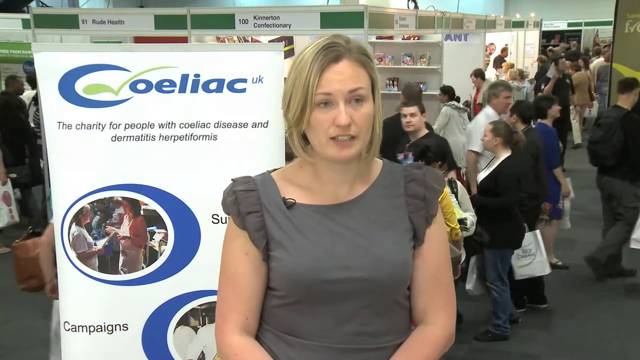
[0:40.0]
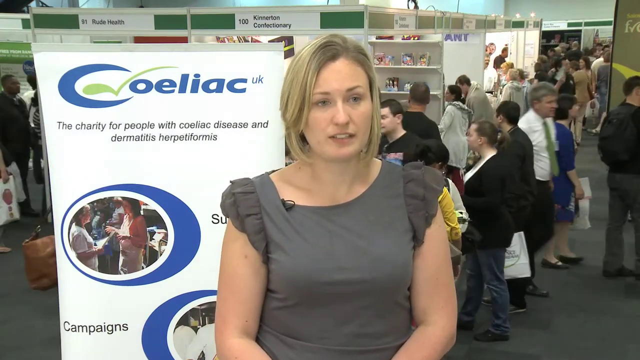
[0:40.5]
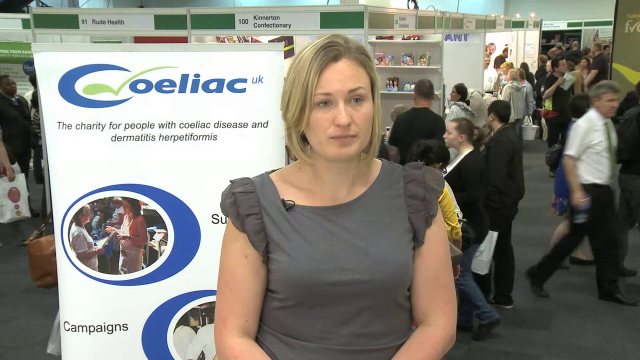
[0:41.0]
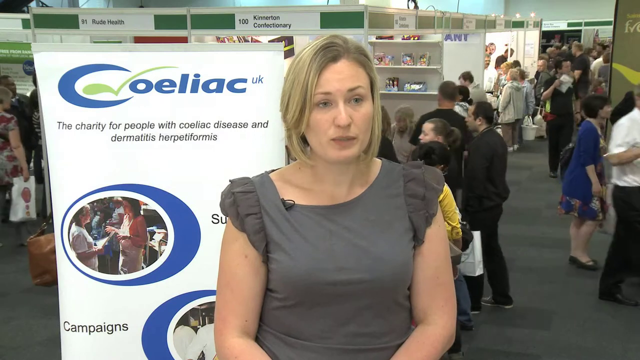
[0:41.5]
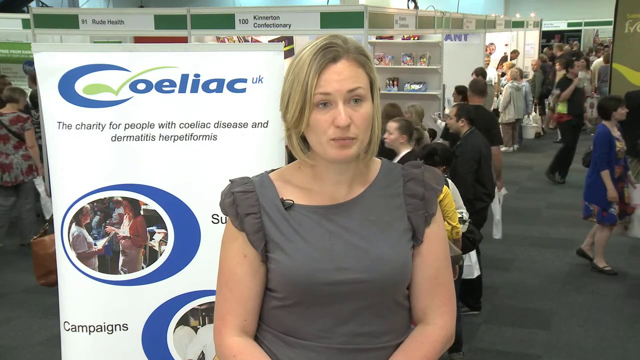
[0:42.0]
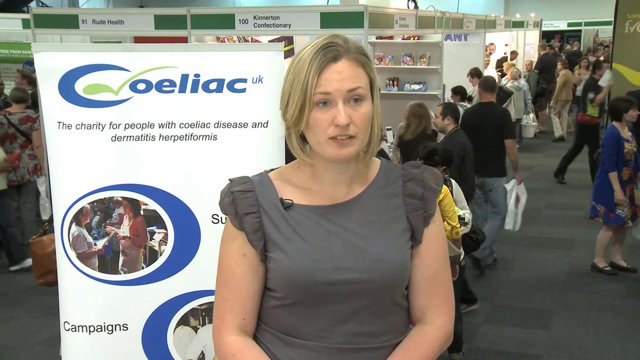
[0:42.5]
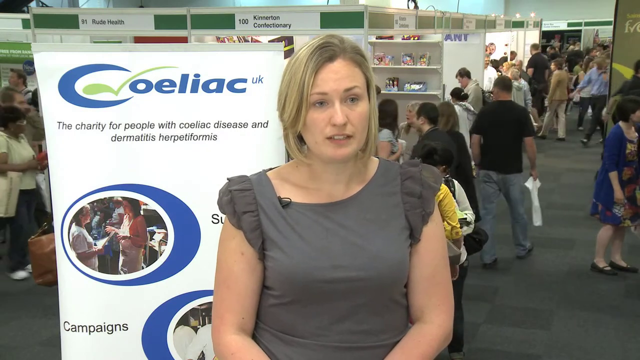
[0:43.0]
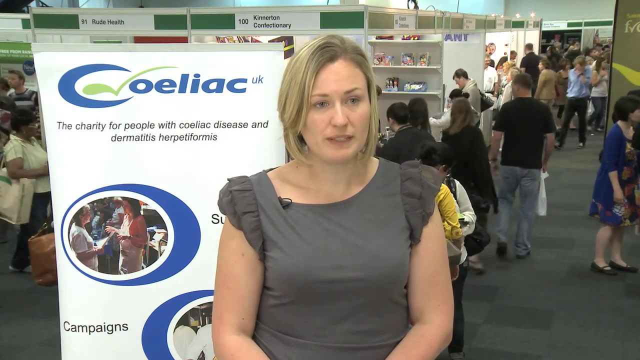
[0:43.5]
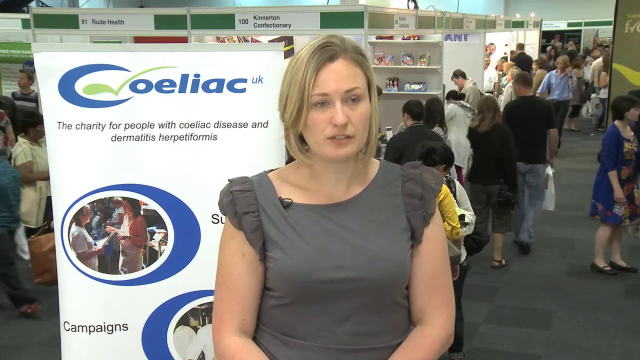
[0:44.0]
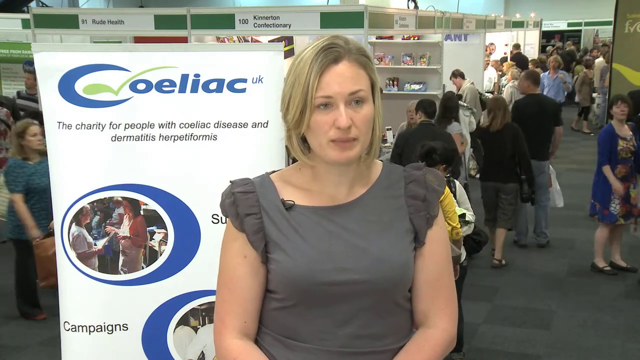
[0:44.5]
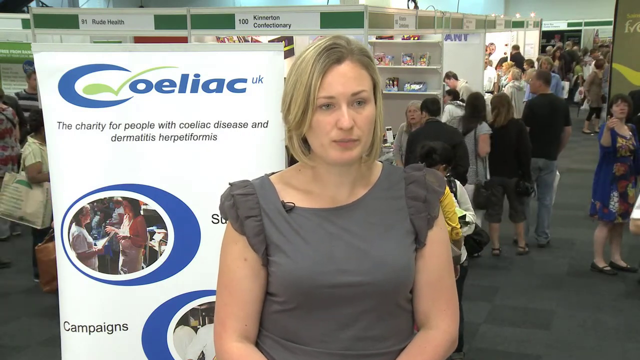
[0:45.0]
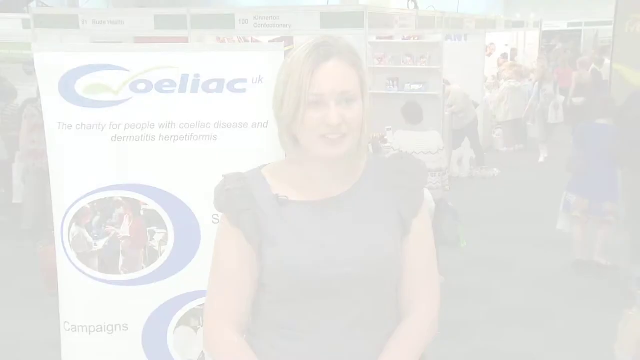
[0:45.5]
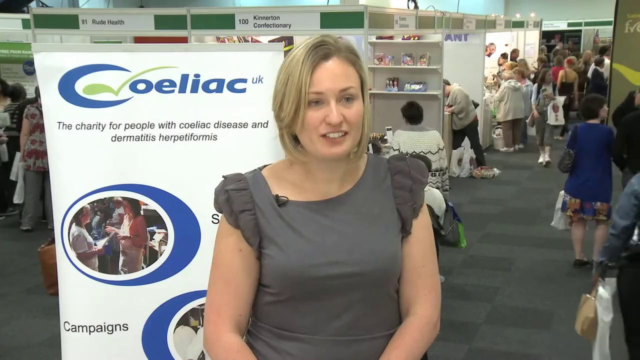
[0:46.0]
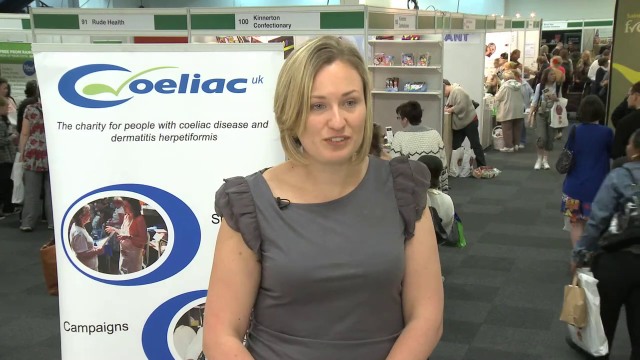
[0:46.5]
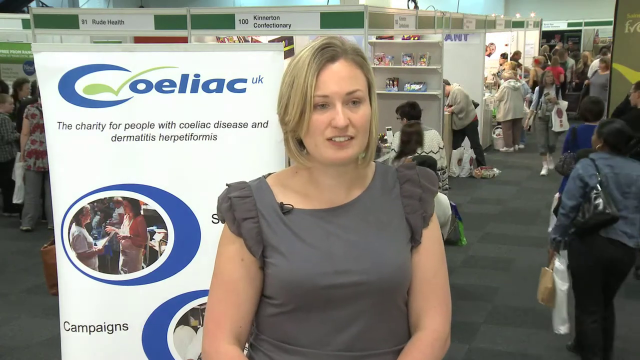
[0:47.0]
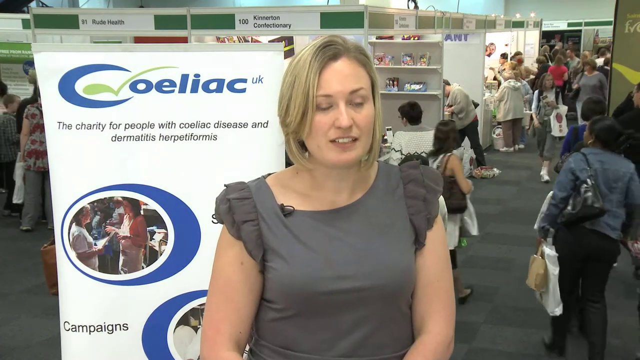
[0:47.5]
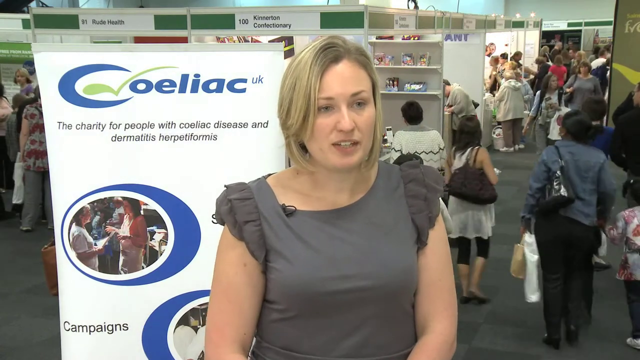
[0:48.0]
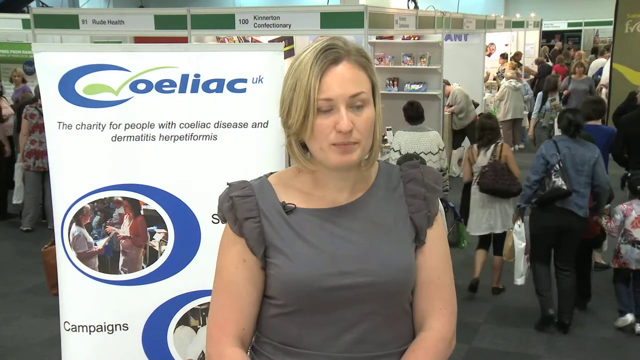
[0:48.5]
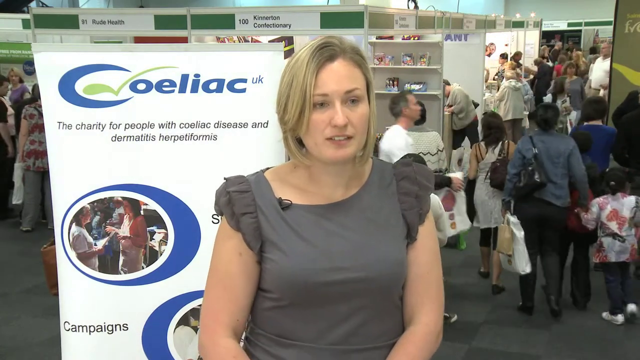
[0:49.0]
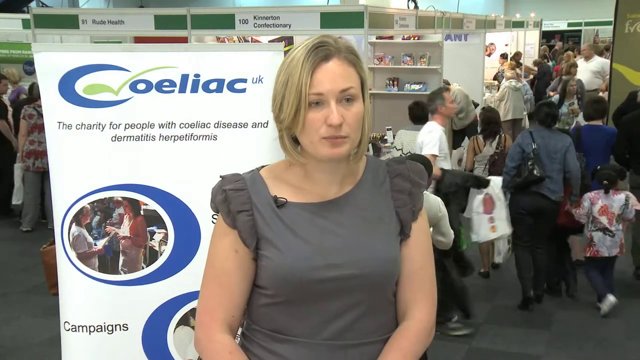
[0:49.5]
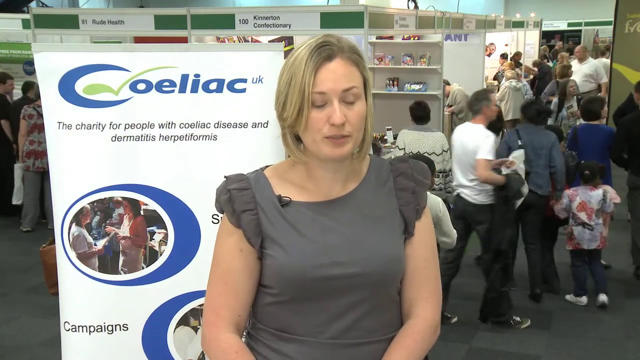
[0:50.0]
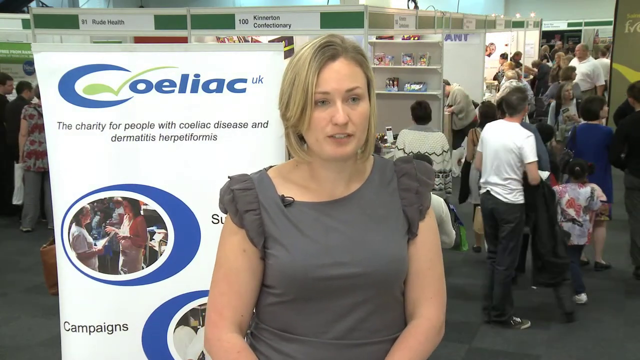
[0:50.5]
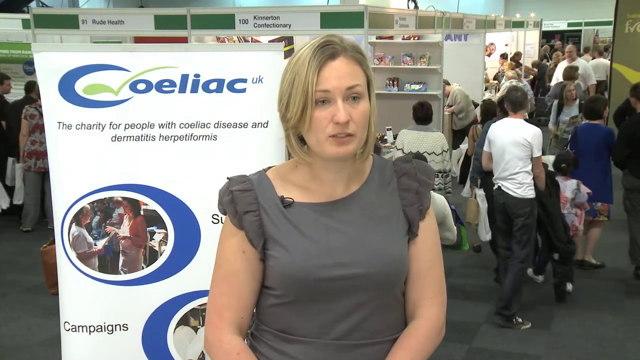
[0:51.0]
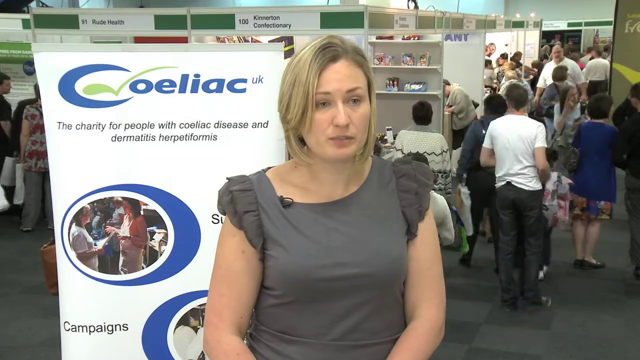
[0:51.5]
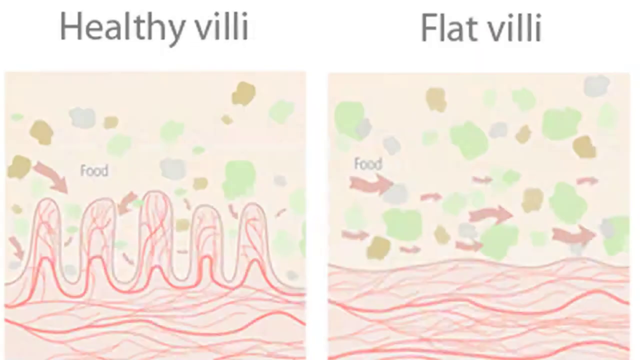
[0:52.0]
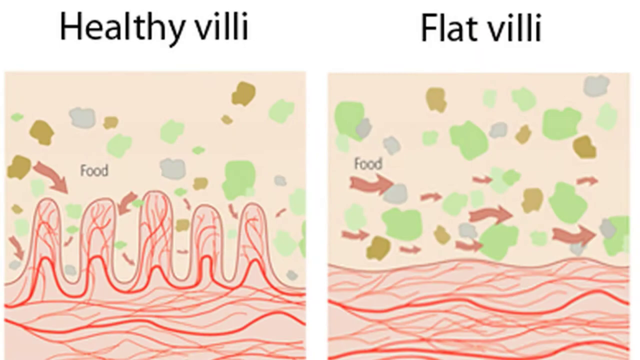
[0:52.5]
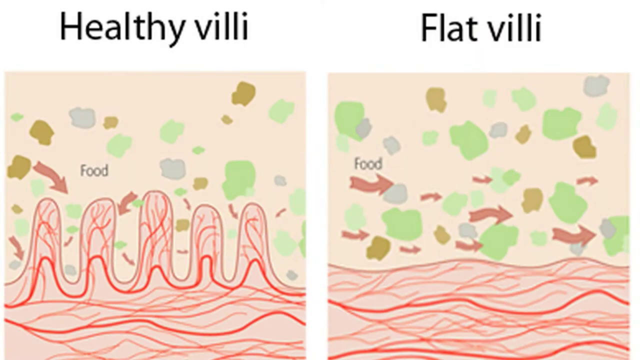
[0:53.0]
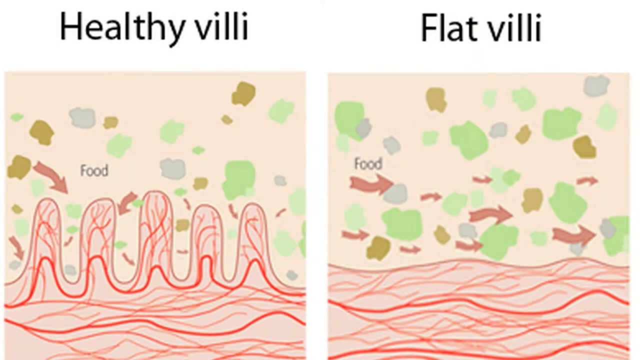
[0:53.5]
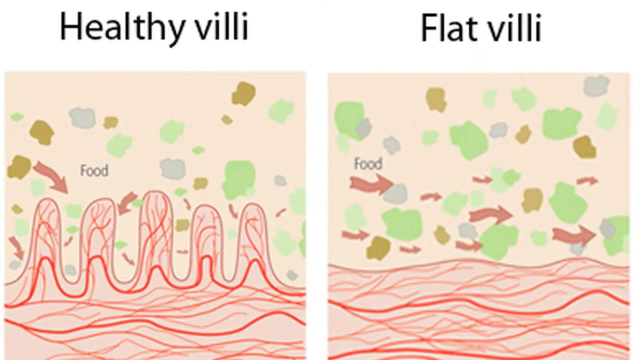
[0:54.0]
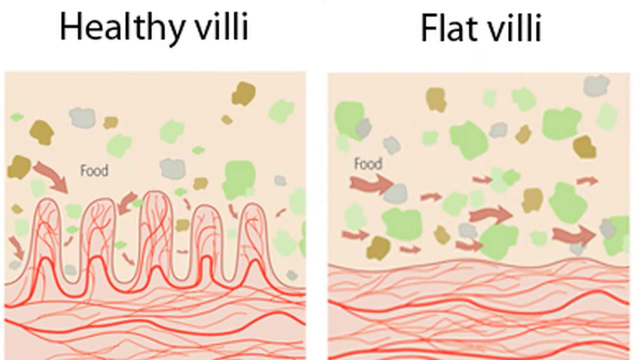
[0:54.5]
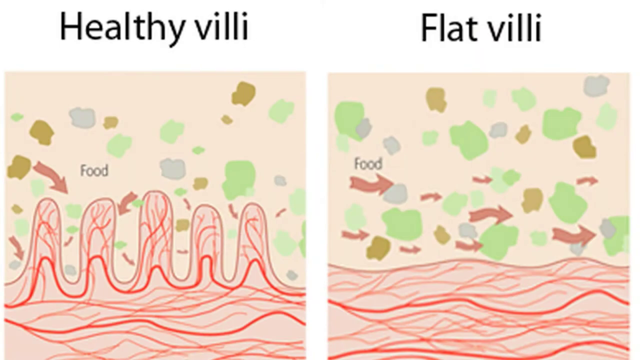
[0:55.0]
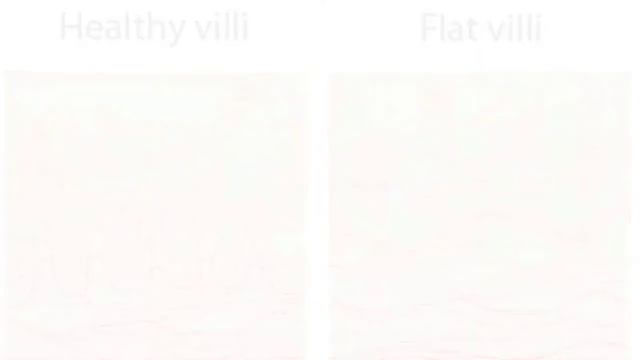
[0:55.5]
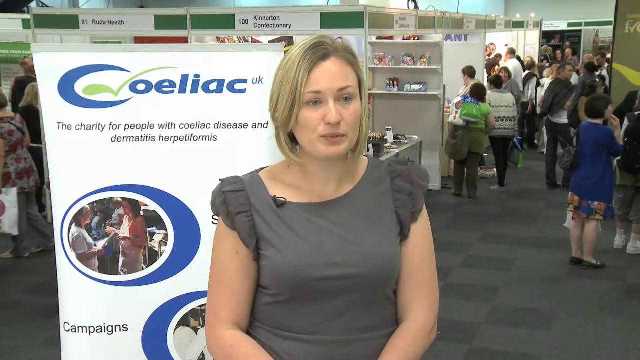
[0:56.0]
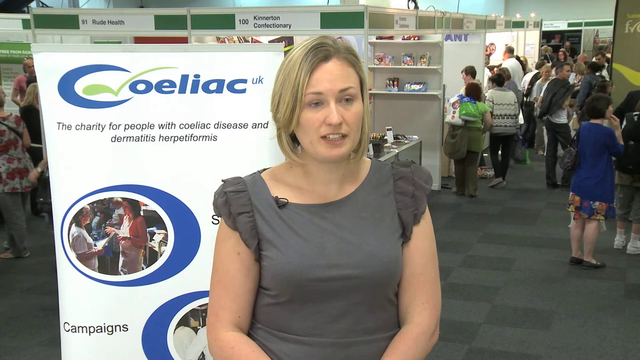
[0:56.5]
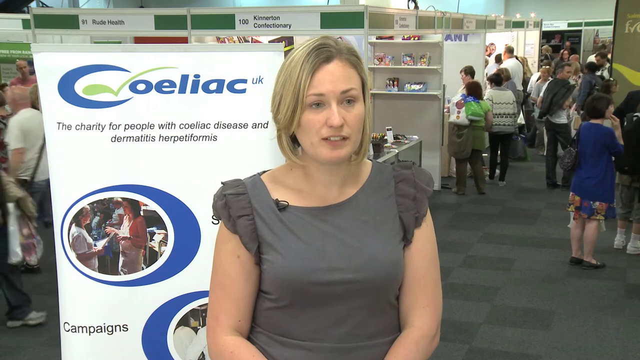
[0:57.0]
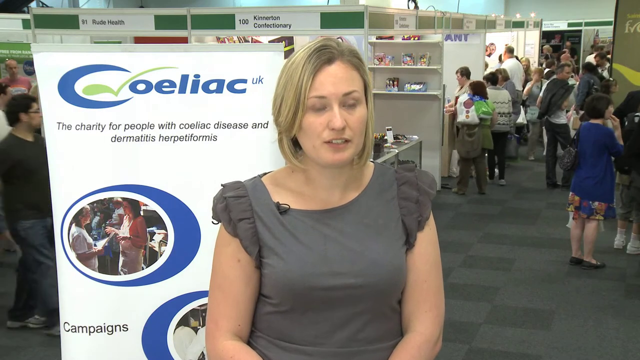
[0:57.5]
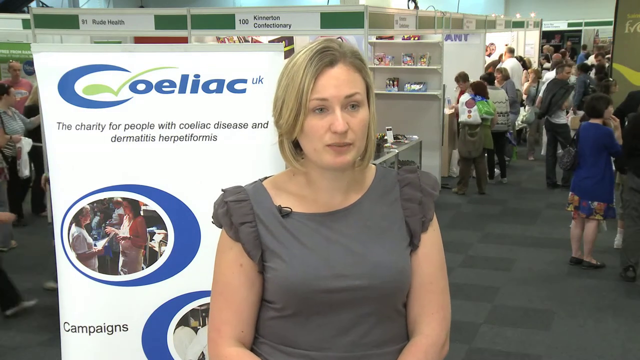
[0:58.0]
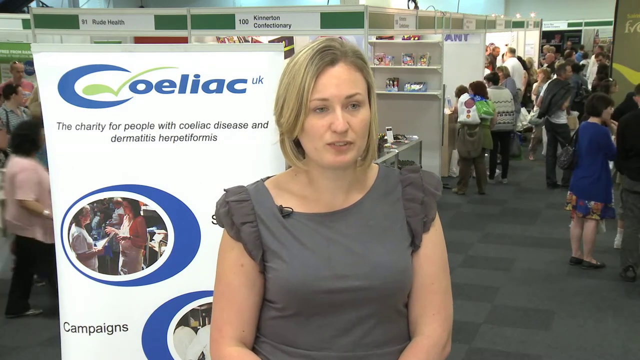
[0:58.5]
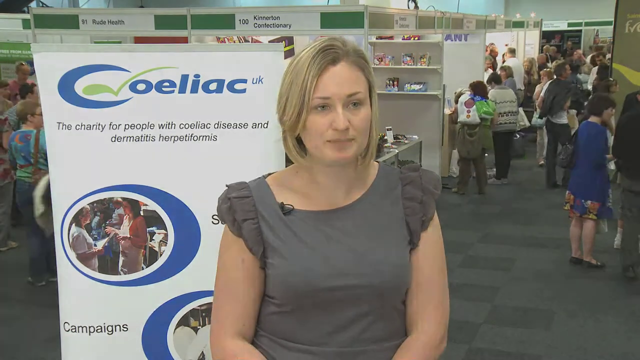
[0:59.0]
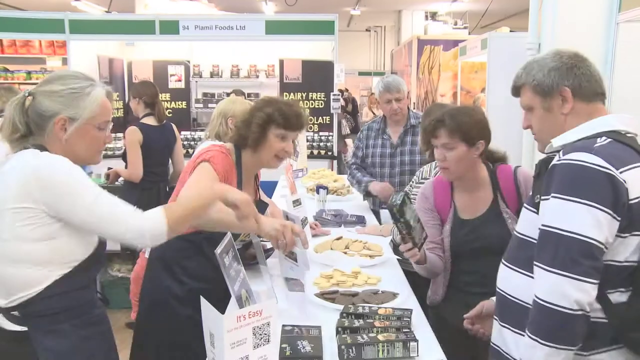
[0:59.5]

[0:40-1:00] The interview with the woman from Coeliac UK continues, with the sign reading "the charity for people with Coeliac disease and dermatitis Herpetiformis." She is still speaking to the camera or to the interviewer while many people walk around and mill about in the background of the convention setting. A screen-wipe-like edit returns to the woman. Then a couple of images appear that look to be diagrams, apparently explaining how the disease is caused and seemingly showing the digestive system. On the left, one labeled "healthy villi" shows images or representations of food and a wavy line. On the right, one labeled "flat villi" shows more images of food in green, orange and gray colors, and the line is much flatter and only slightly wavy, representing the villi.